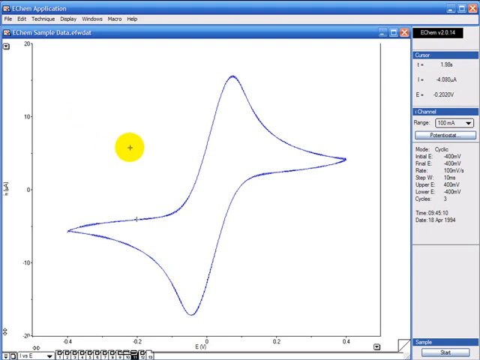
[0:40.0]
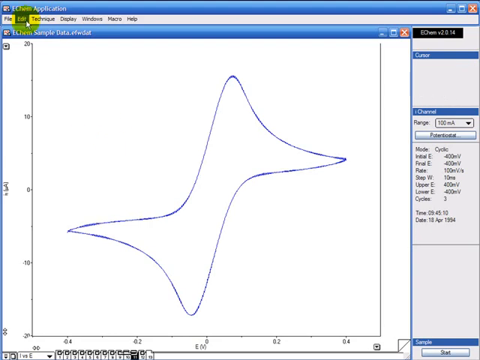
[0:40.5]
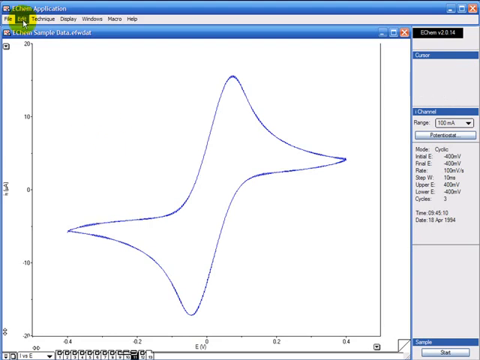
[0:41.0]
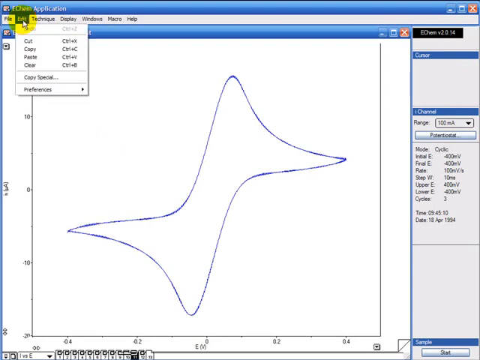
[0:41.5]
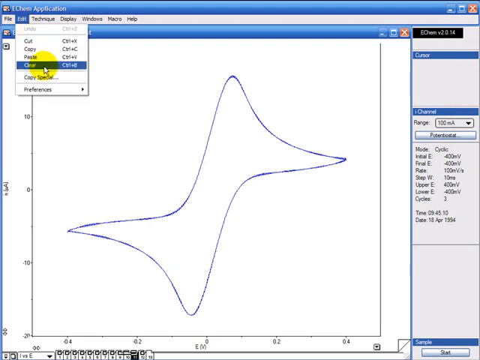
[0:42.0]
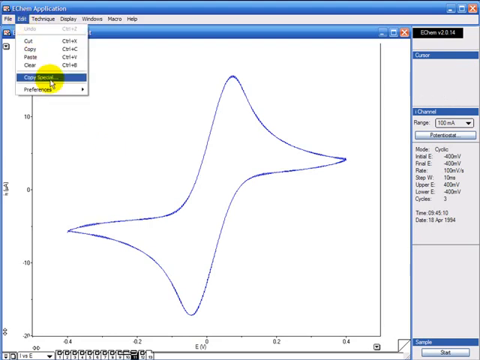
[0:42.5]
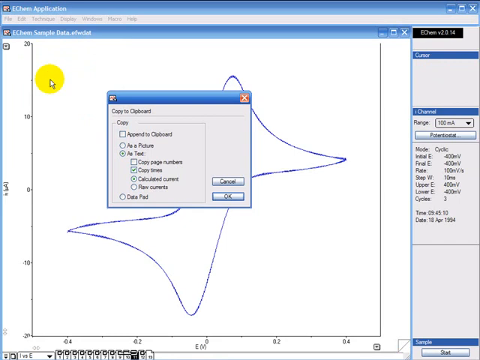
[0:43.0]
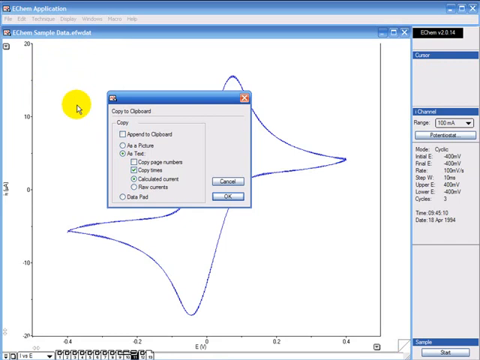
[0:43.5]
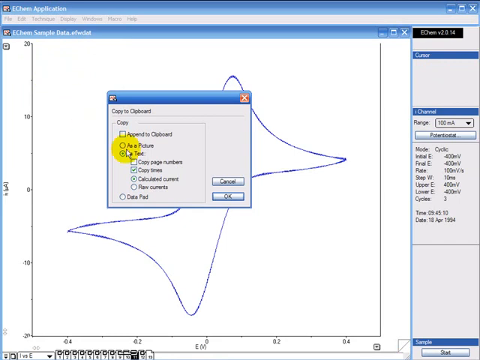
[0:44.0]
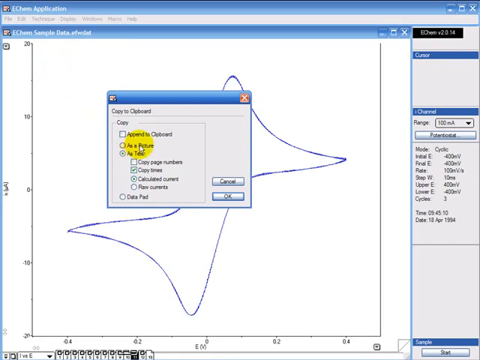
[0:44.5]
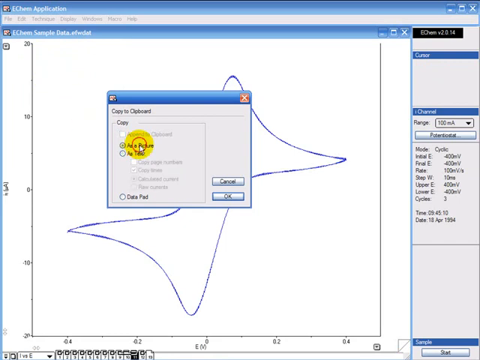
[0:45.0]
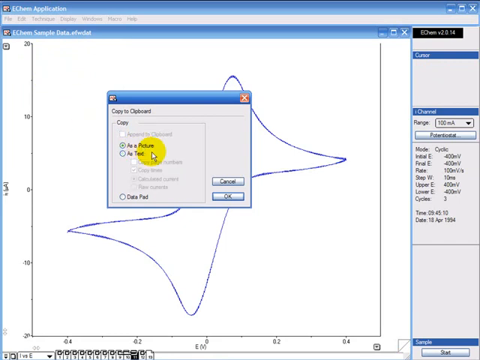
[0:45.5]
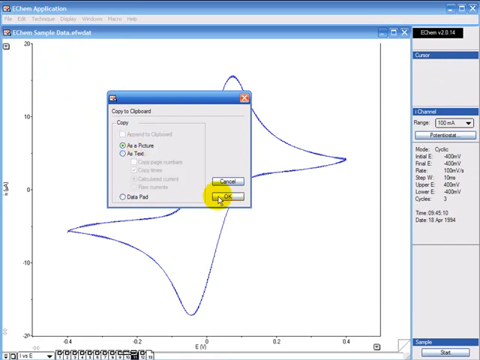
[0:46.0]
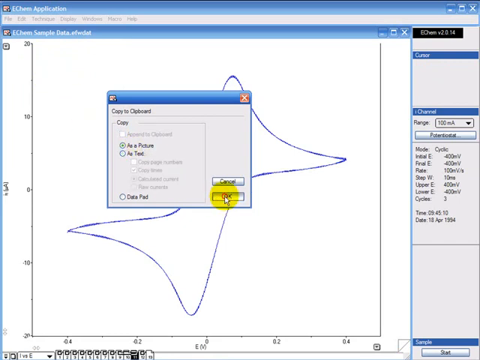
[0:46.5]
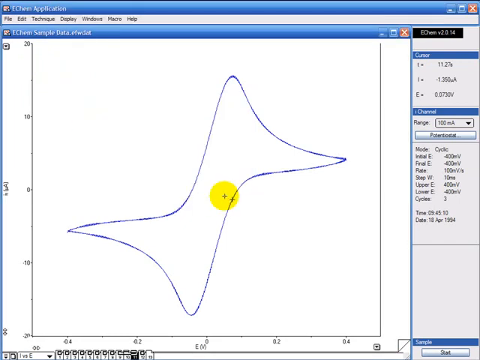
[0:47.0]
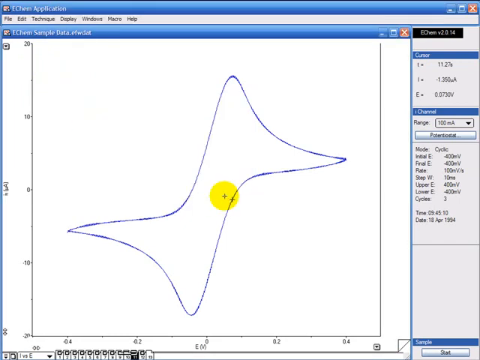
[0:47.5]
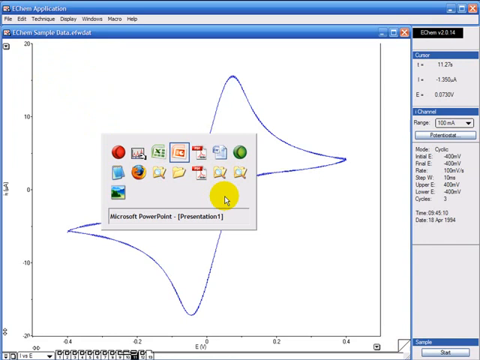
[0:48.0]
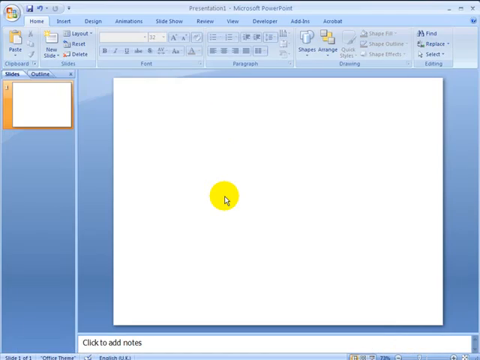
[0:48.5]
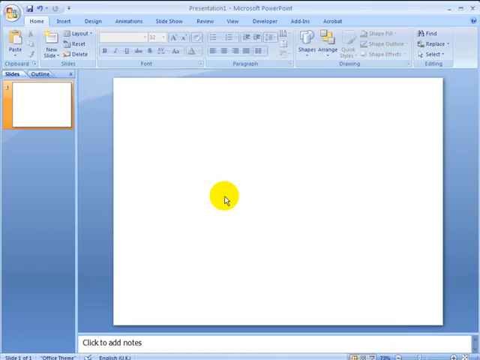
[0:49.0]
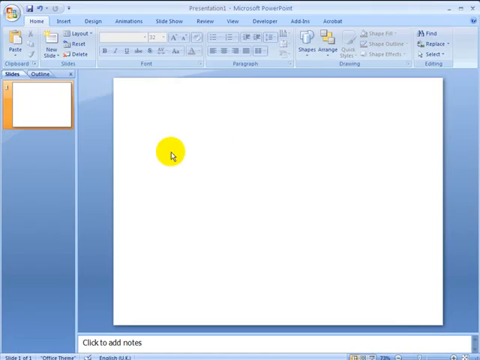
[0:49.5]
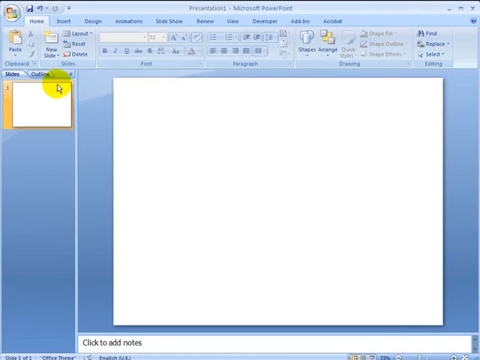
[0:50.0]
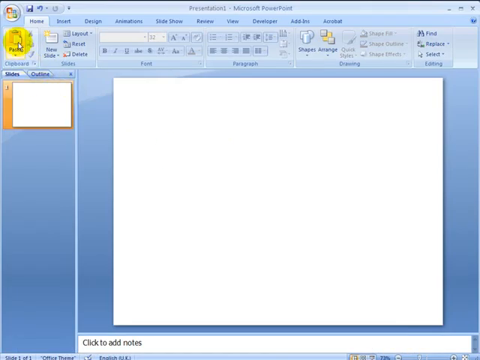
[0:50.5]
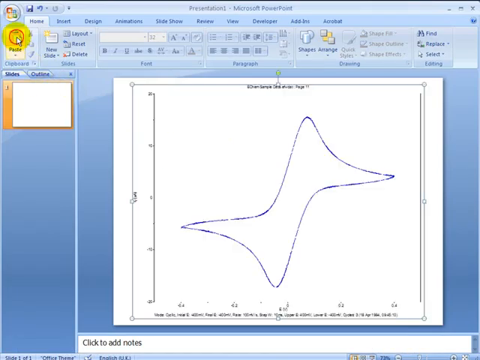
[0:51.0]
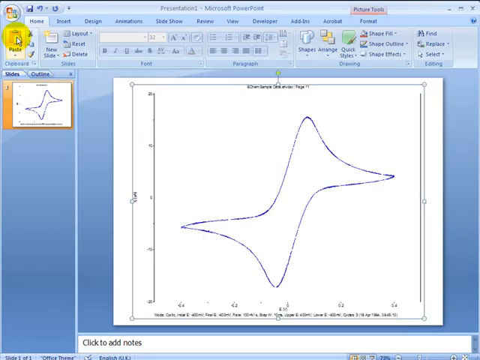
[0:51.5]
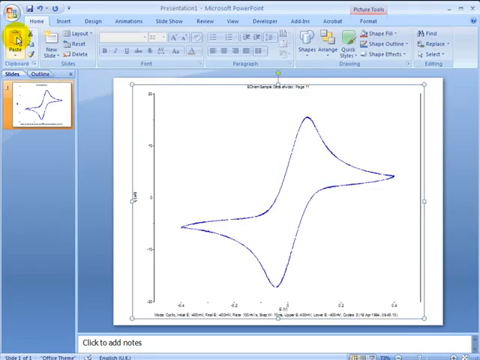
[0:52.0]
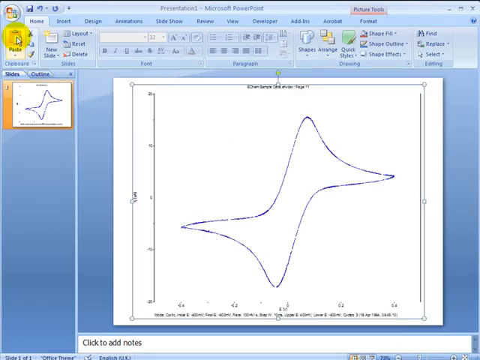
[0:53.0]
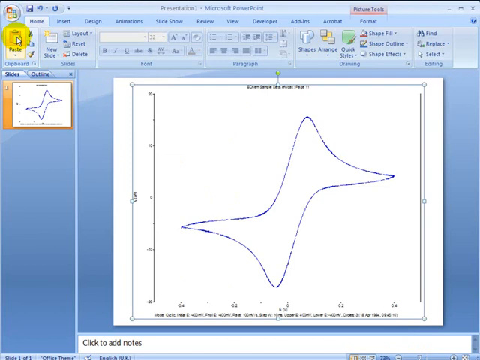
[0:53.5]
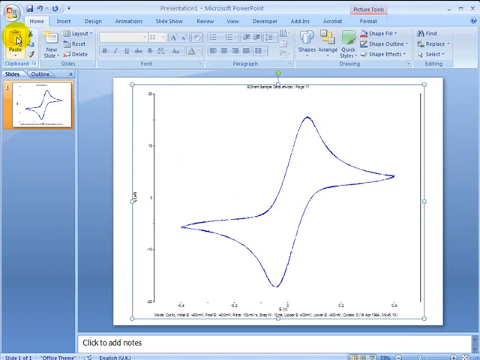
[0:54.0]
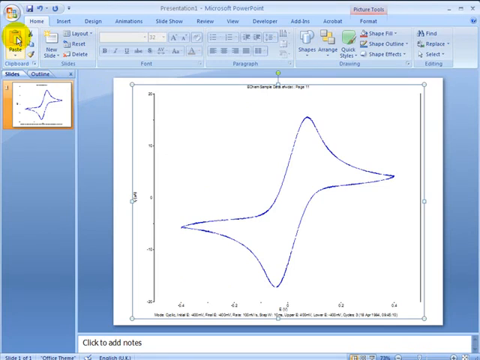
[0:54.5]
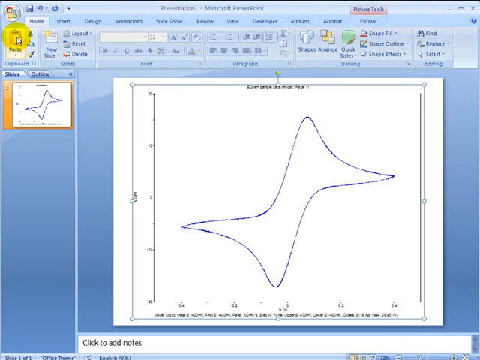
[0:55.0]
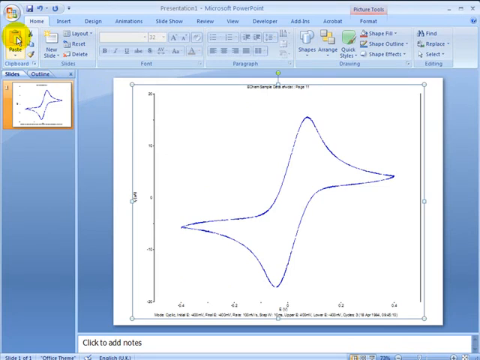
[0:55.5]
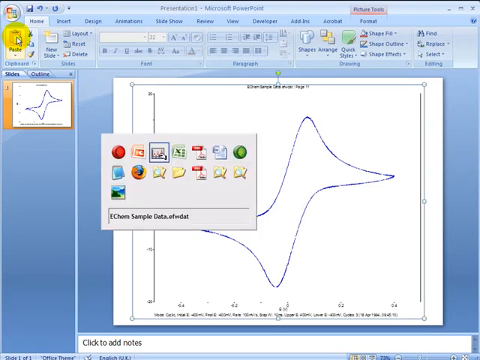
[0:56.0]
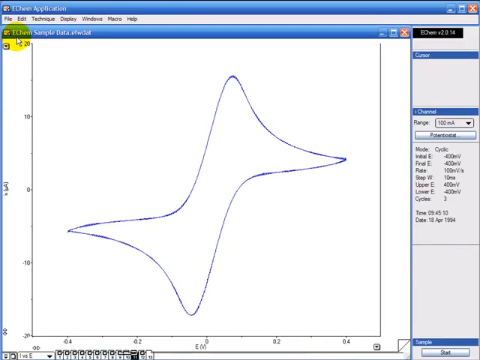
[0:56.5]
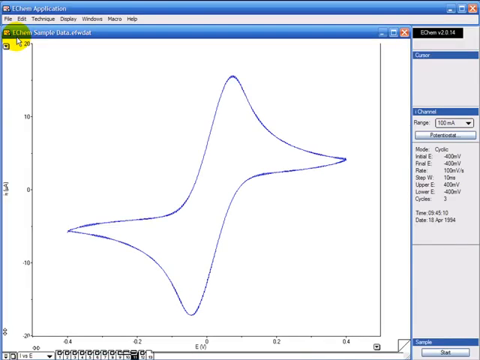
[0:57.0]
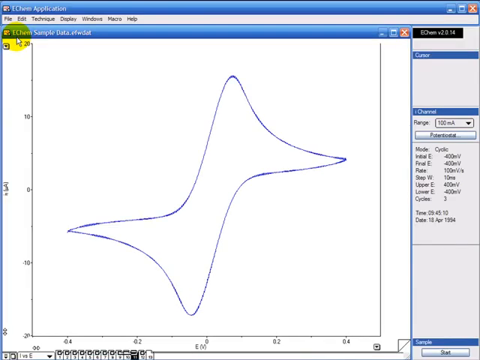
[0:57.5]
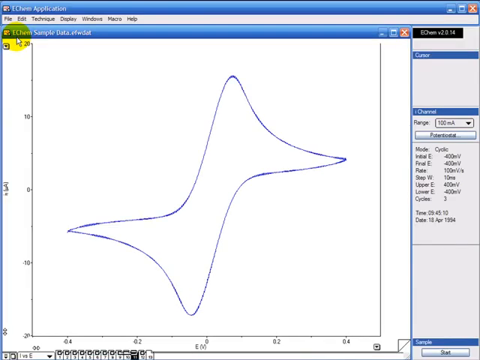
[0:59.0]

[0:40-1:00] Edit and copy as a picture are selected, OK is clicked, Microsoft PowerPoint is chosen as the application, and paste is clicked. The shape from the original file is pasted as a picture into Microsoft PowerPoint. The graph has an X and a Y axis with numbers. The list of applications offers multiple options, possibly including Microsoft Word.